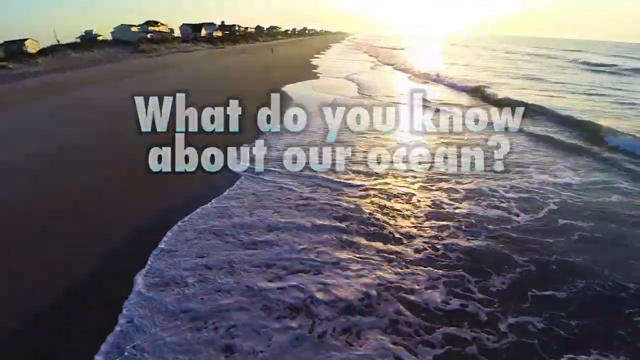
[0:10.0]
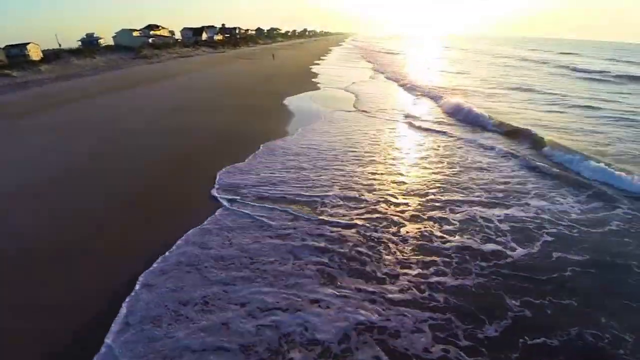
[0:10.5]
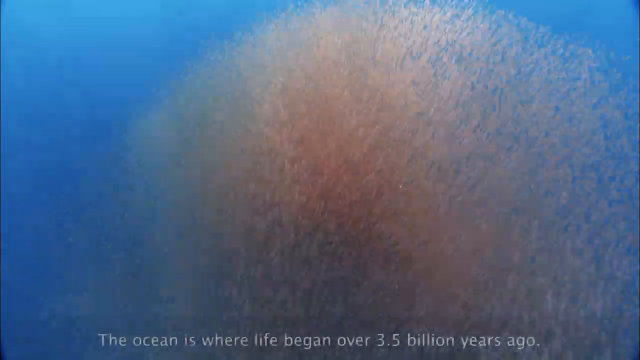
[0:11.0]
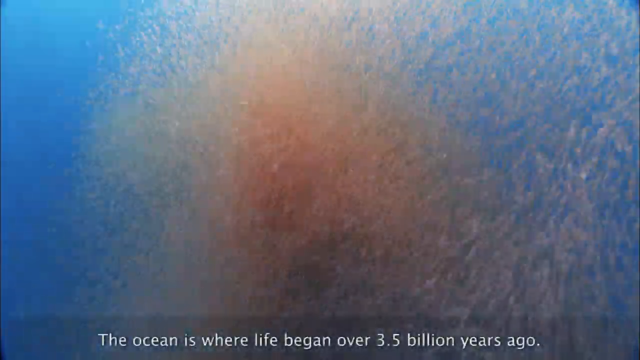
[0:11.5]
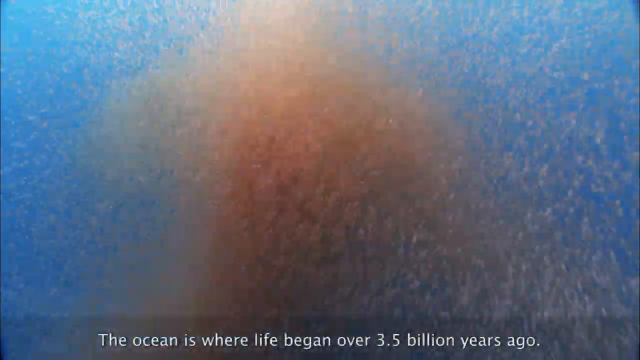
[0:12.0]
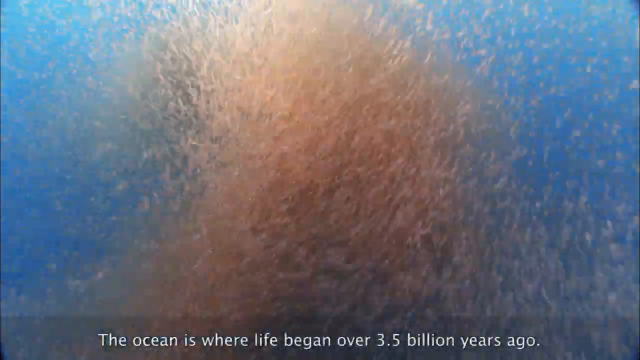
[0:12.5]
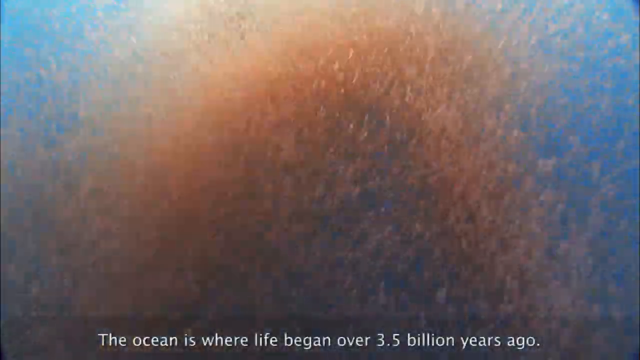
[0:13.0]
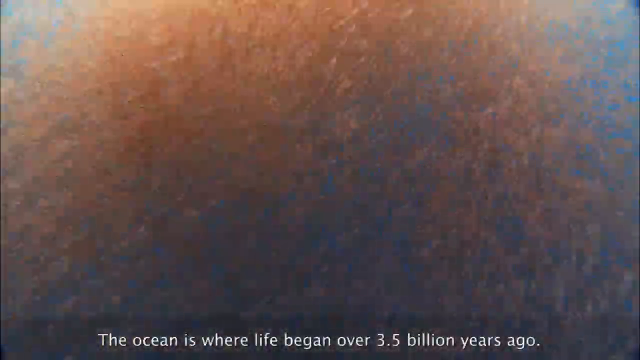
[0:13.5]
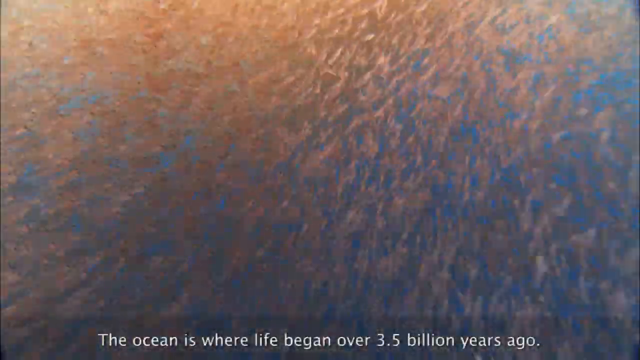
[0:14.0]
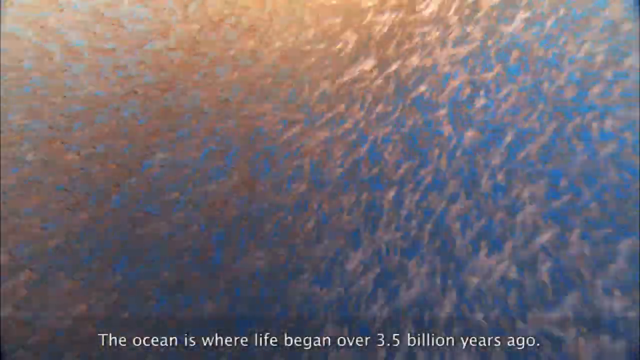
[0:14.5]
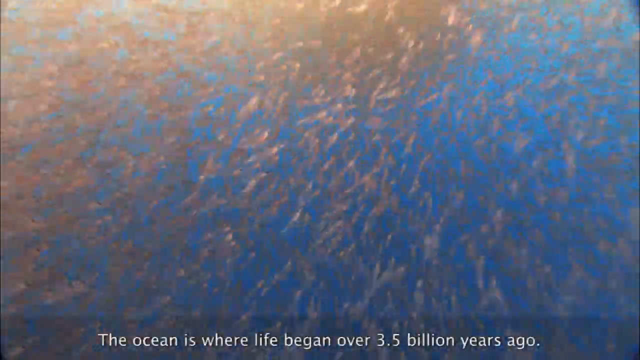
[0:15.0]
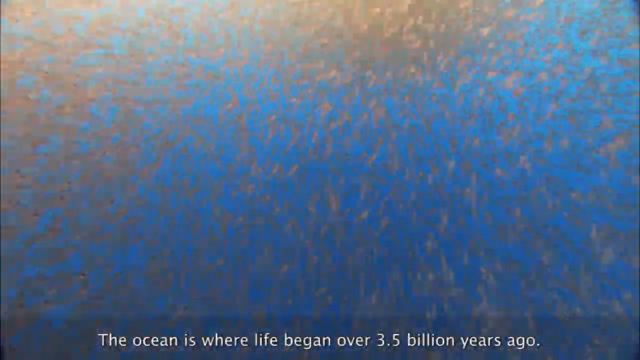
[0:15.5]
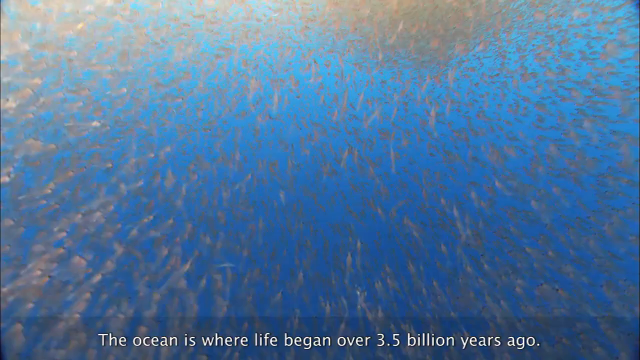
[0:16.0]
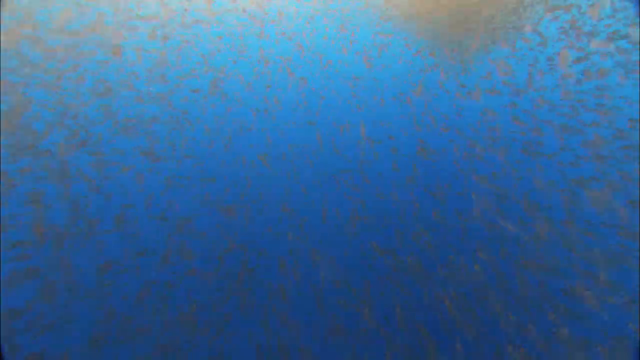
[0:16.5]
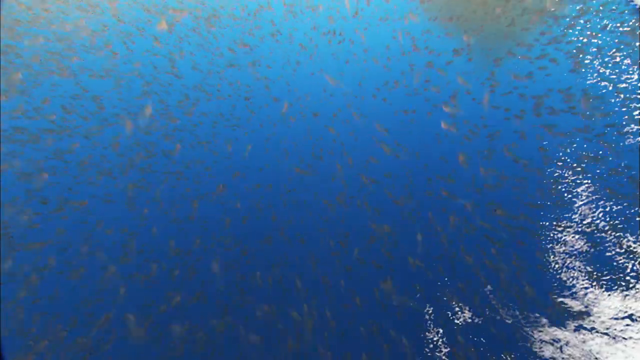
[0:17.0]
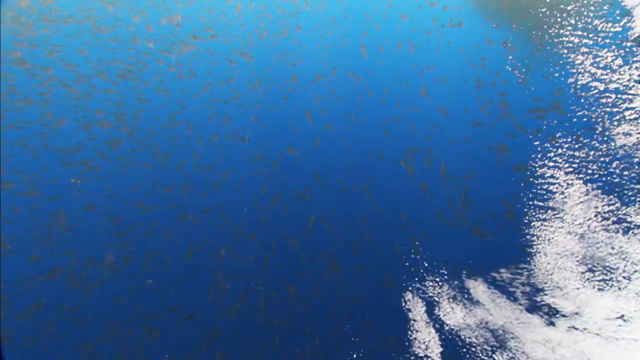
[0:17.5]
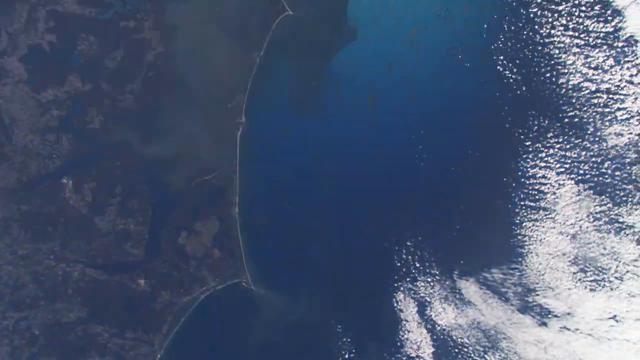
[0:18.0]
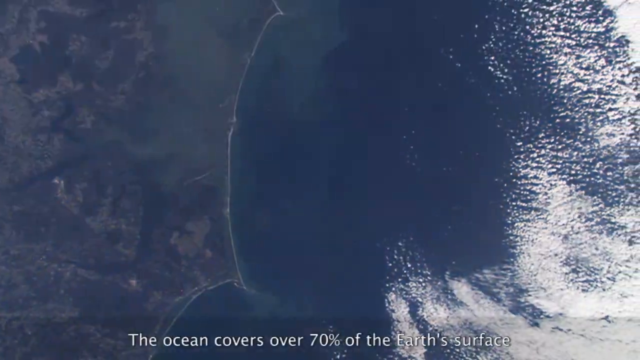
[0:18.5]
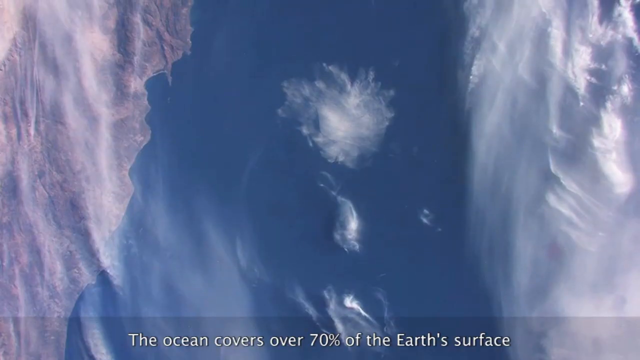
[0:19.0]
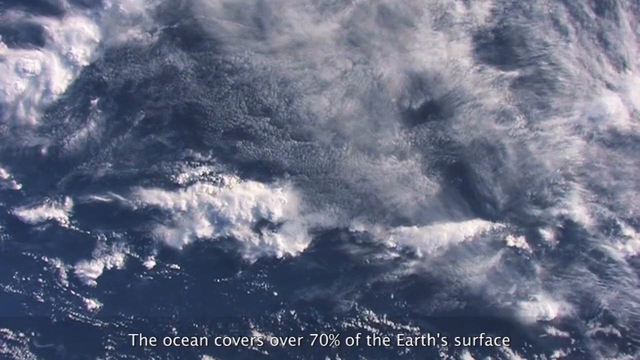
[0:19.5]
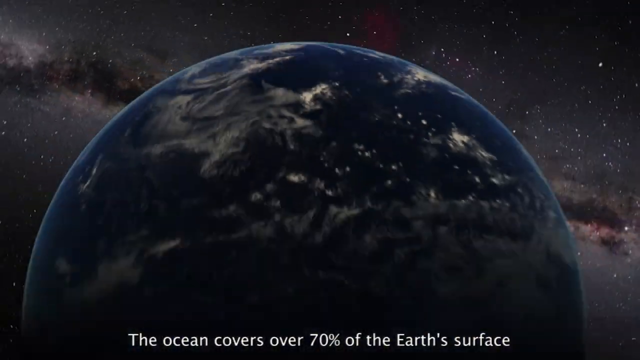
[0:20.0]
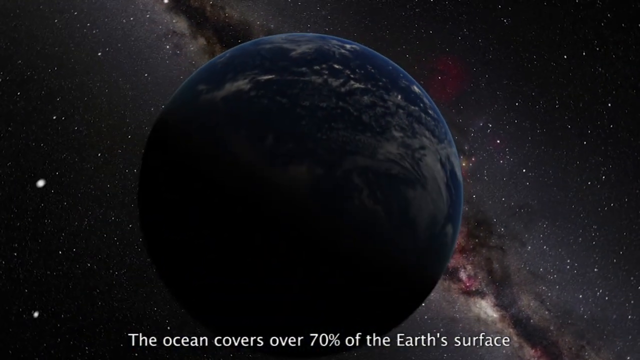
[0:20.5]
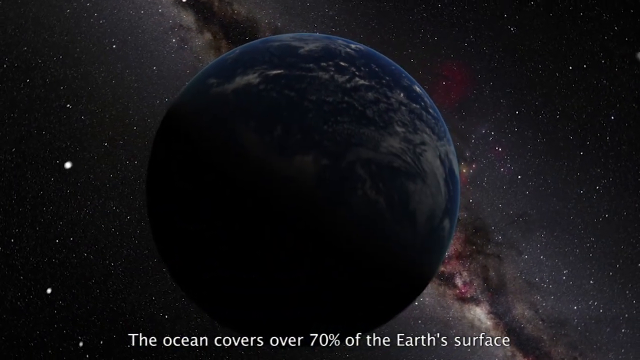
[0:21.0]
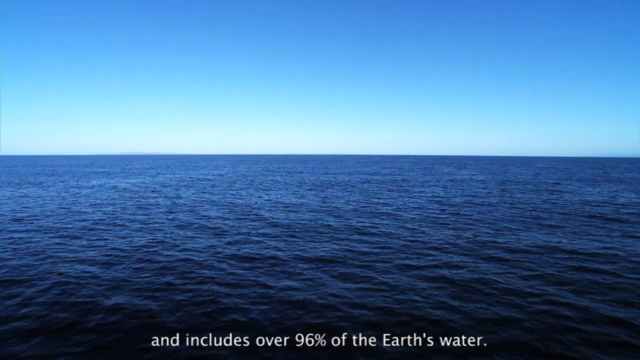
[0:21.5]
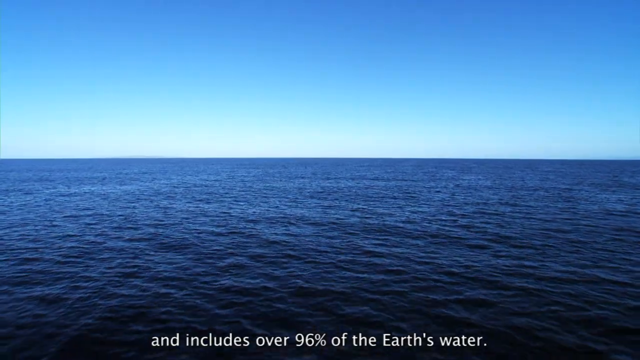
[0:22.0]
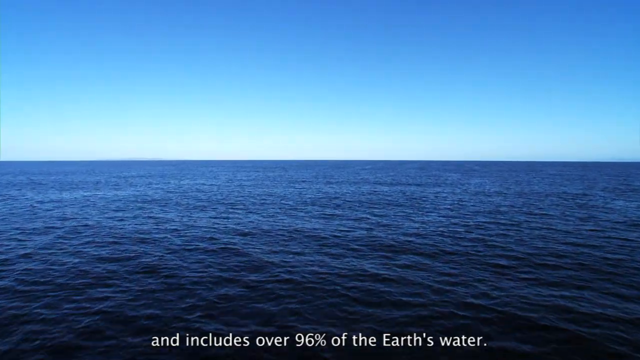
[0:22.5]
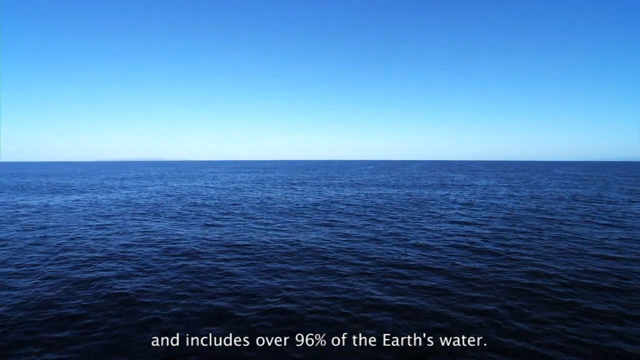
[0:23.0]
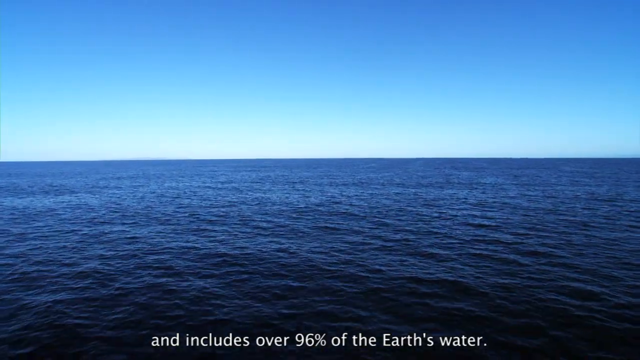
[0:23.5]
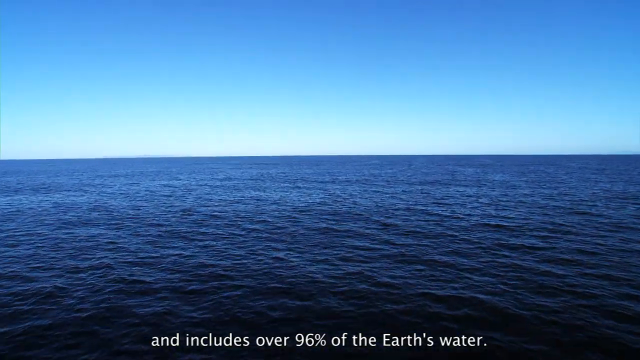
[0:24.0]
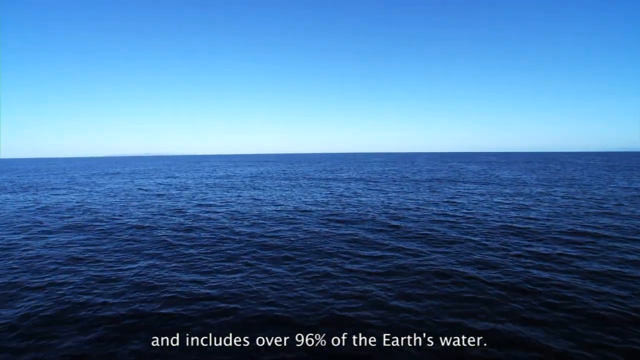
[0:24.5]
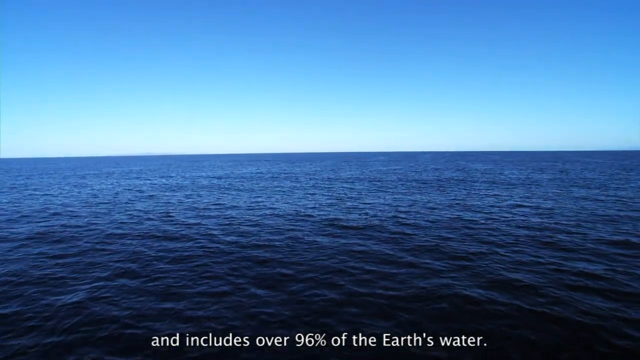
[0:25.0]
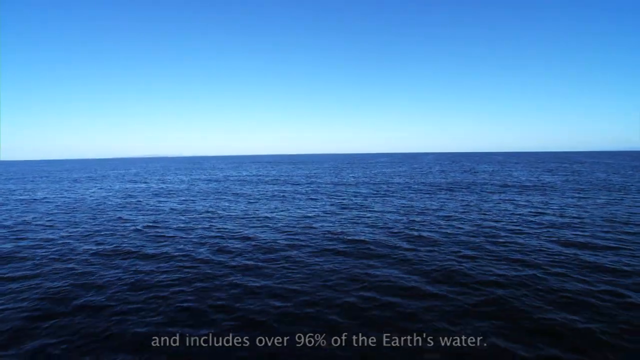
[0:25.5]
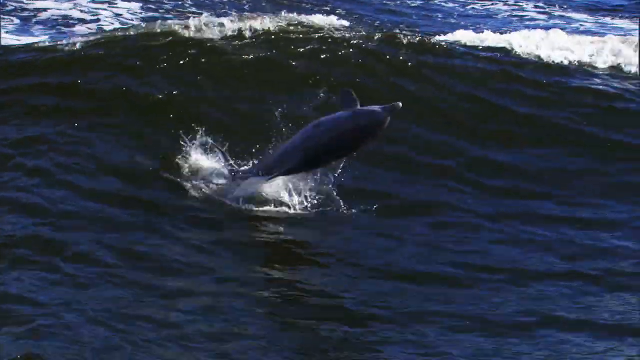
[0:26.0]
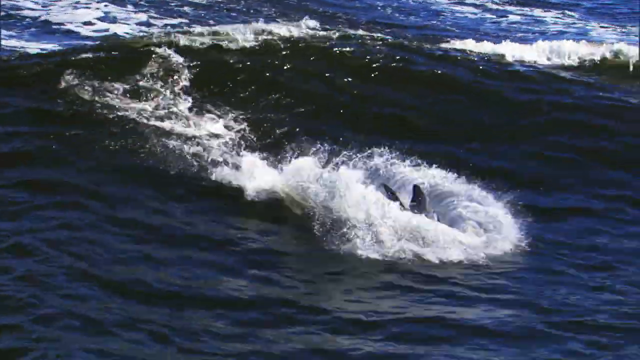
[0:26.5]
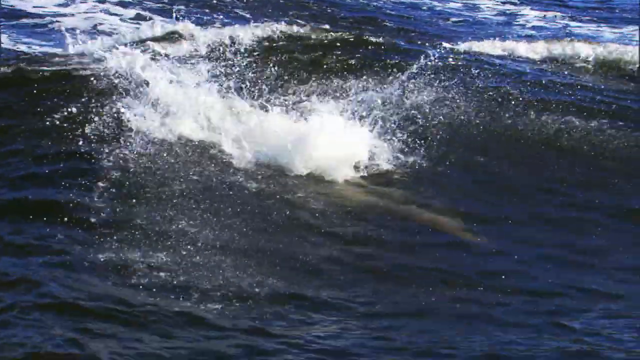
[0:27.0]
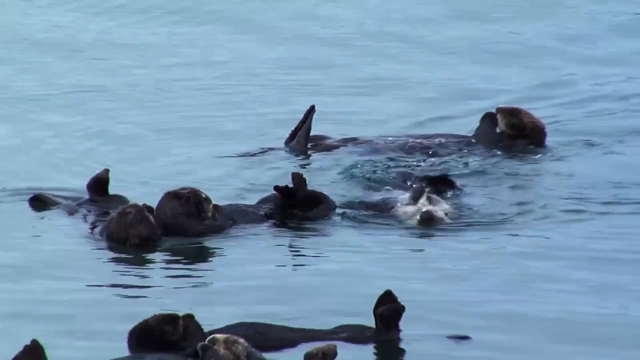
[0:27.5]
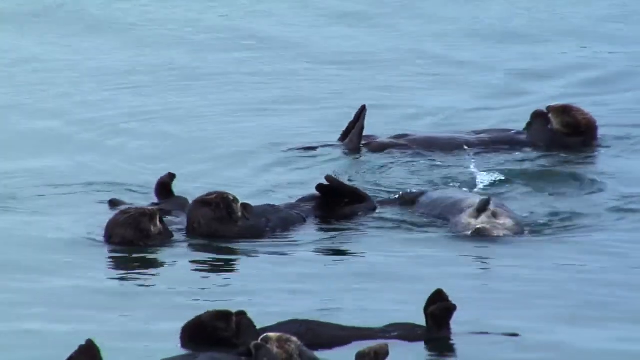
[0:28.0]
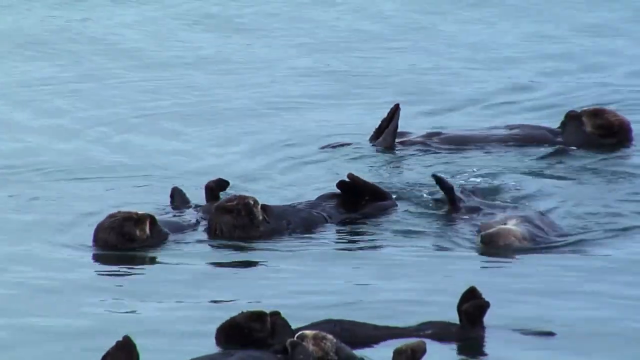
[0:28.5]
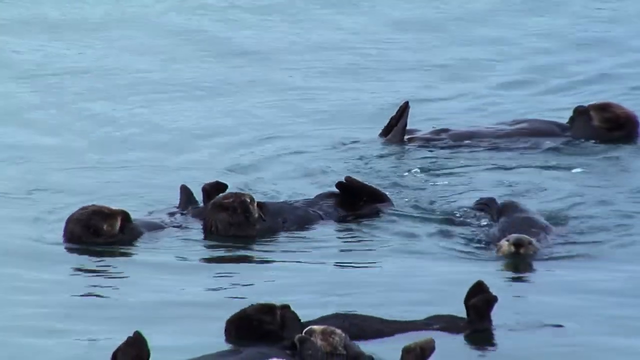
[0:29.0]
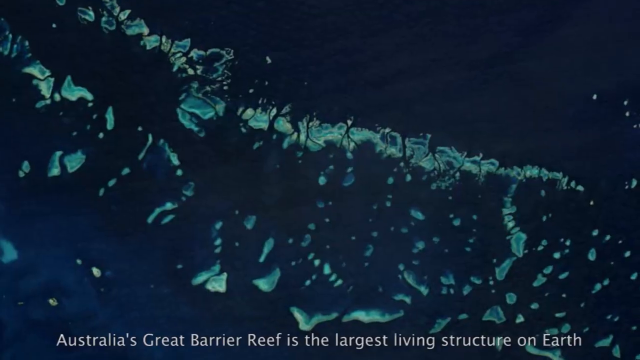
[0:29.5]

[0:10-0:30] Text reads "The ocean is where life began" and "The ocean covers 70% of the Earth's surface and includes over 96% of the Earth's water." Different animals and species commonly found in the ocean are shown.